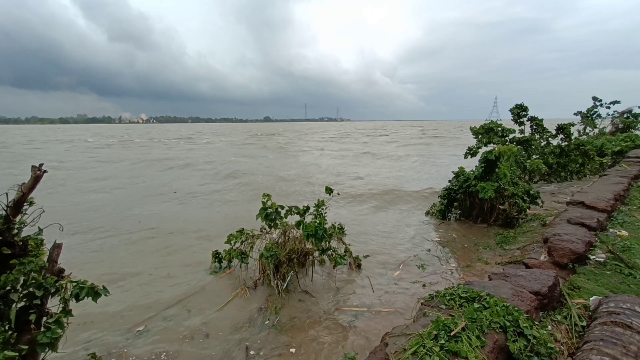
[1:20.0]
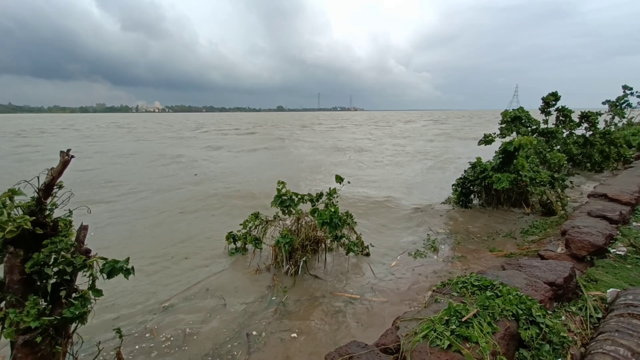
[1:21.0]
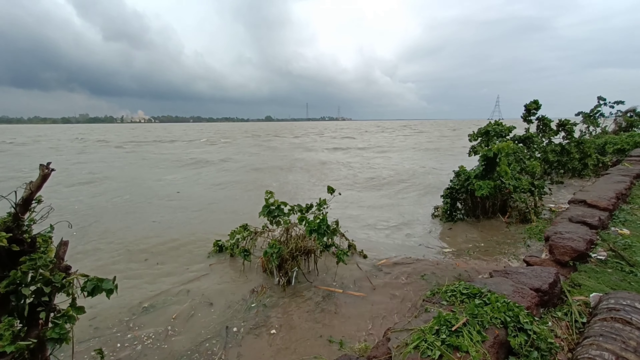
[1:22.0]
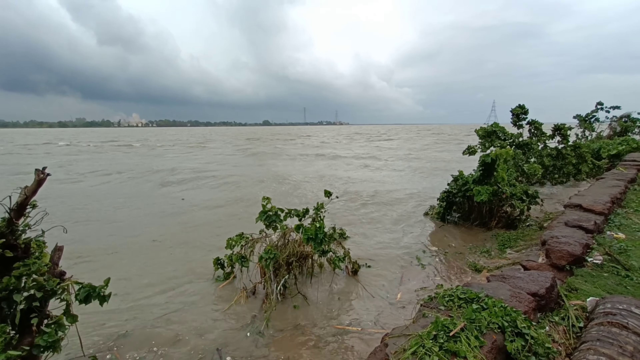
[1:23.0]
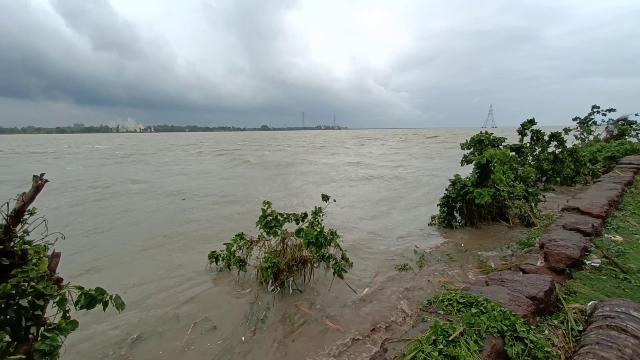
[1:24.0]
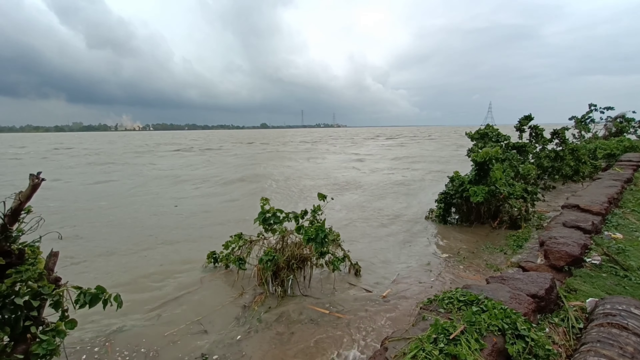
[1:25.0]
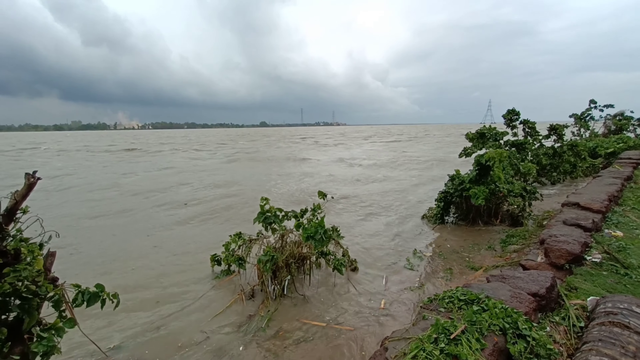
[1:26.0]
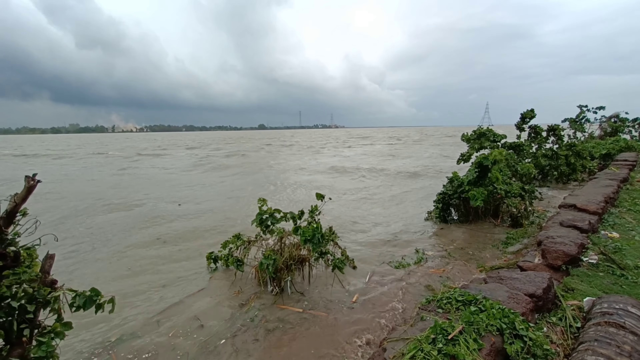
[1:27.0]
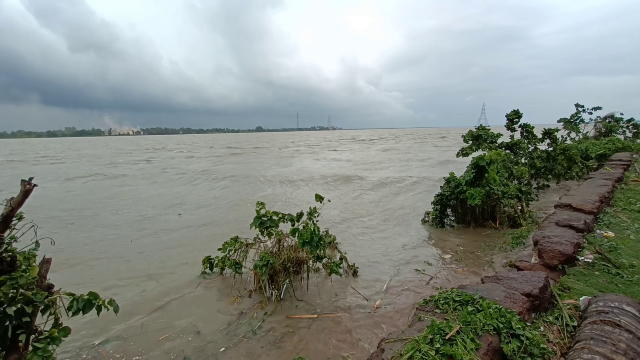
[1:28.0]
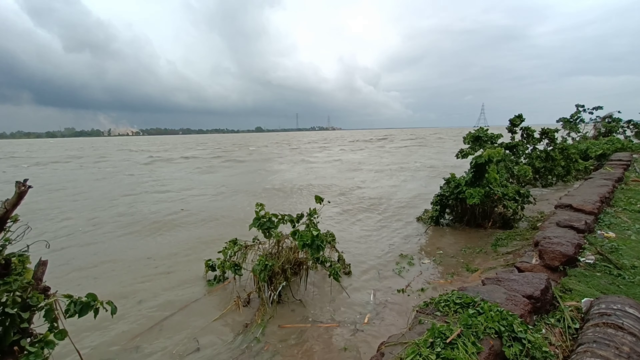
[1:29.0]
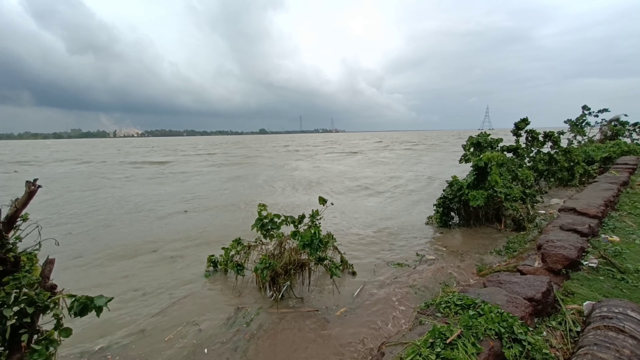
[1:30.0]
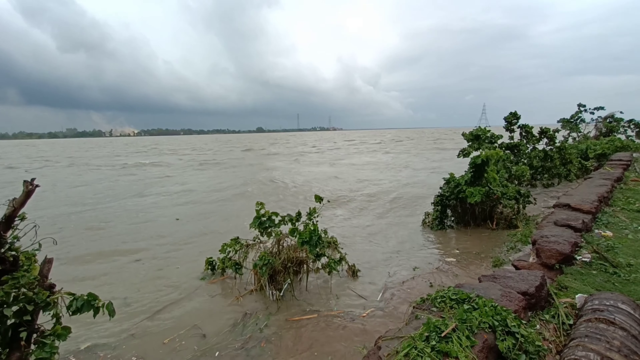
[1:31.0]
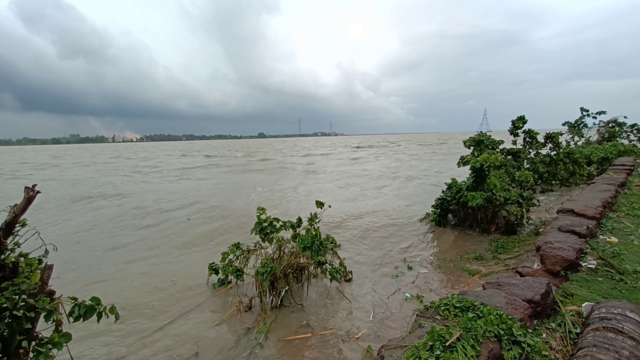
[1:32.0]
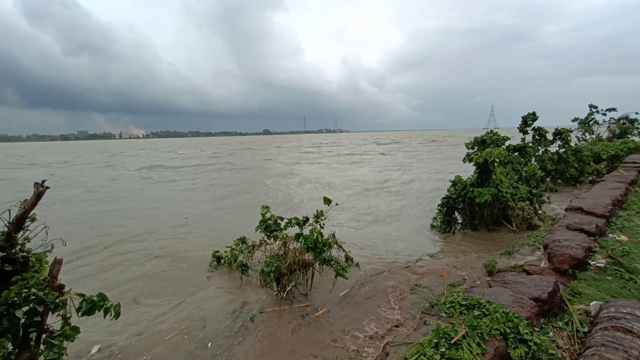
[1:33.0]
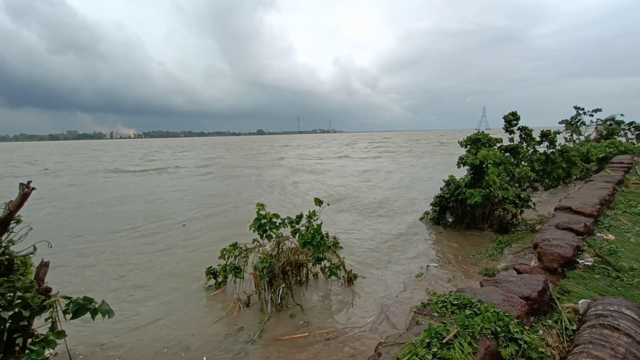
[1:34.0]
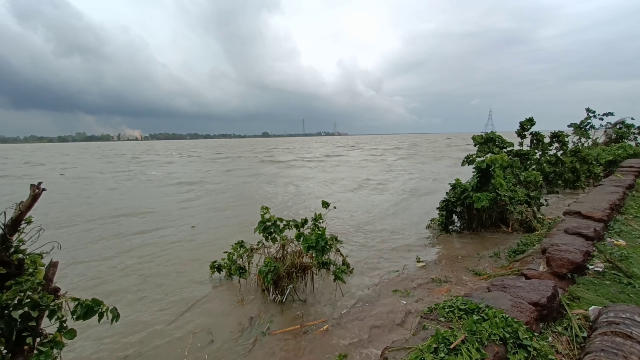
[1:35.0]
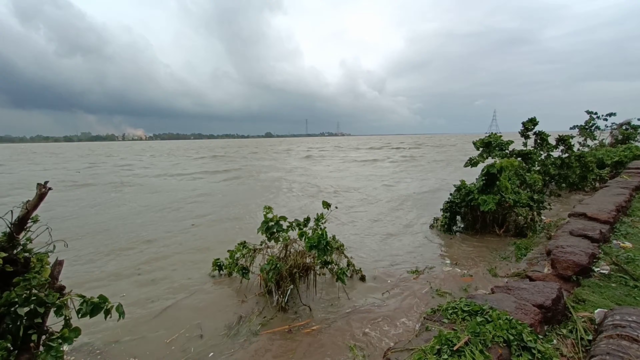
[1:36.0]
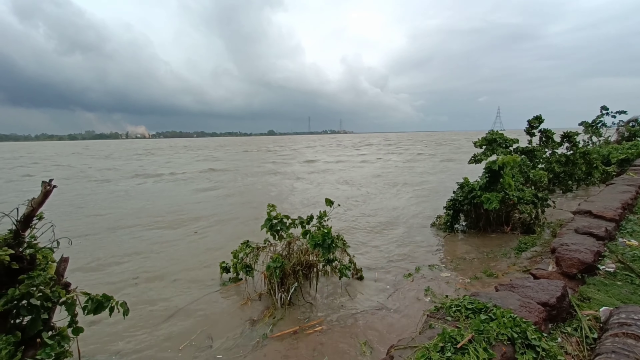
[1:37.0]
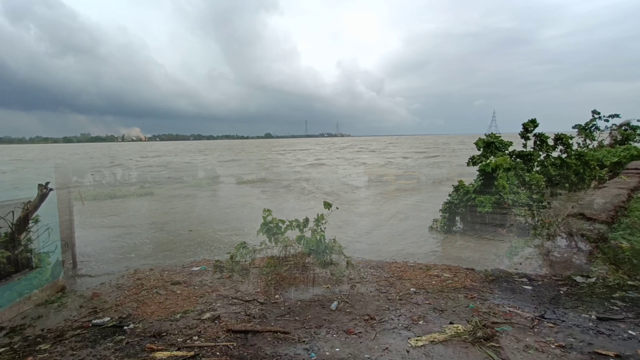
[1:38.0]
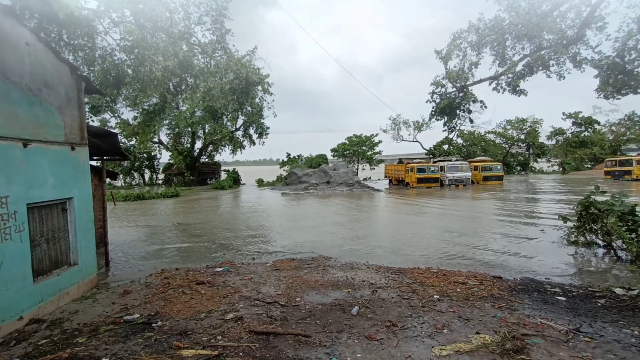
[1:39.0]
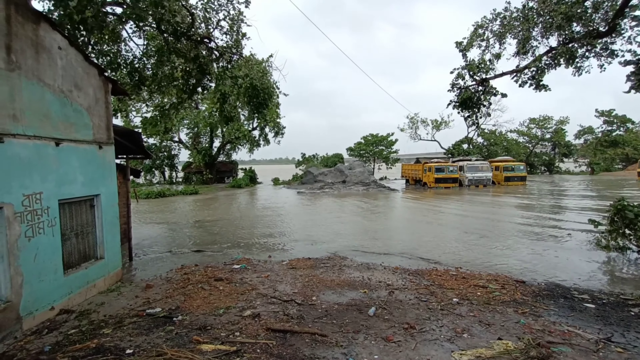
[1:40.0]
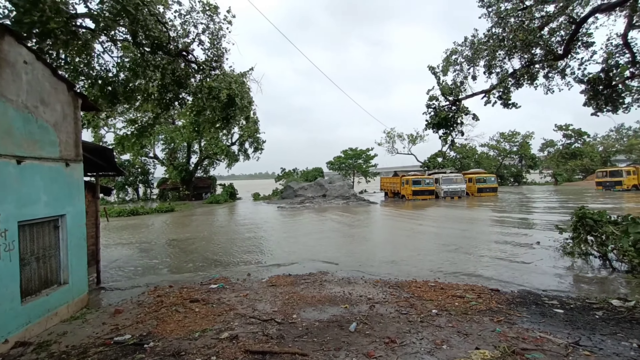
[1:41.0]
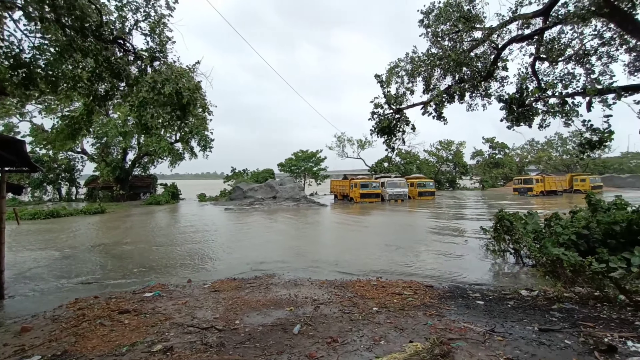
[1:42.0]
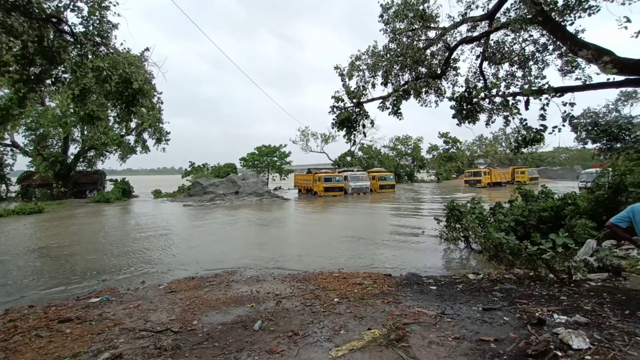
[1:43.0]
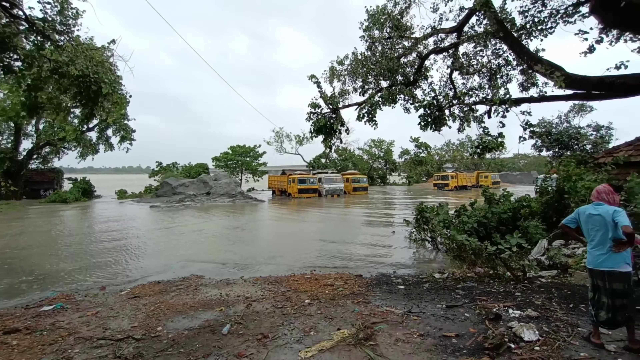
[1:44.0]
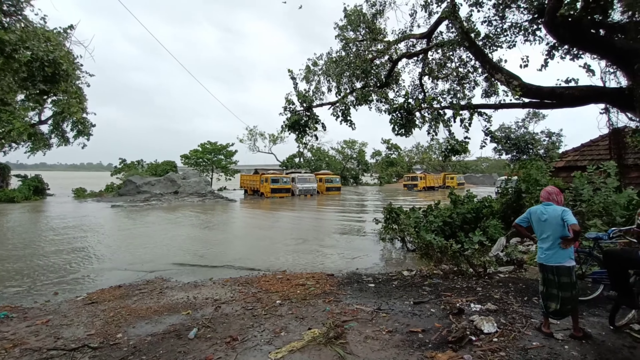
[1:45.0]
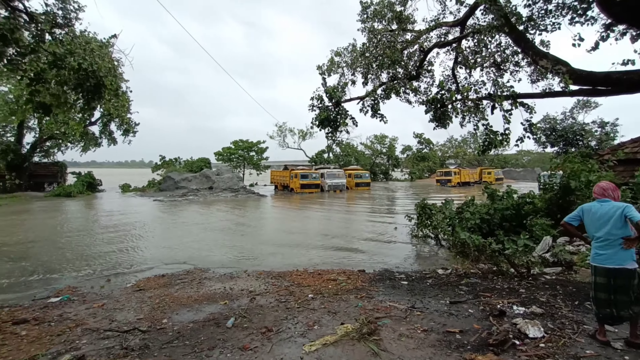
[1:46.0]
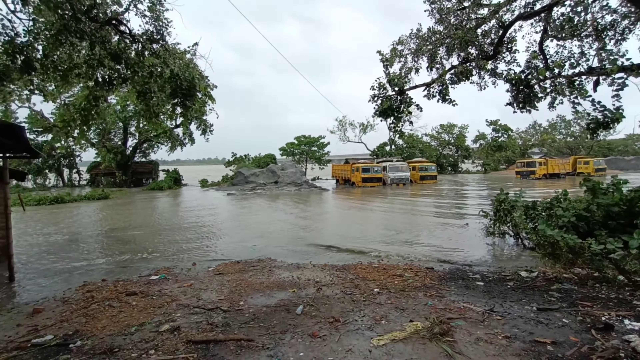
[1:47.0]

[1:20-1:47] More of the same flooded scene is shown, with the clouds and a sort of eye where the sun would be if the clouds were not there. Partway through, the view transitions to a more grounded angle showing a couple of yellow vehicles parked, not moving. Many of the wheels are flooded, especially on a white vehicle in the middle between the two yellow ones. The person stands near a turquoise building on the left, and to the right some people seem to be figuring out what to do, looking kind of frustrated.